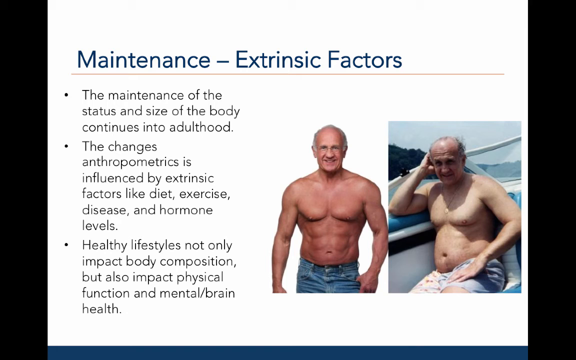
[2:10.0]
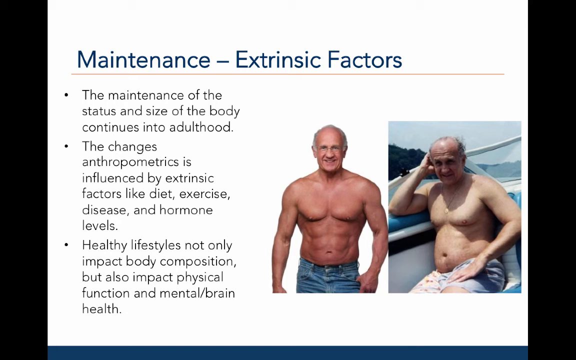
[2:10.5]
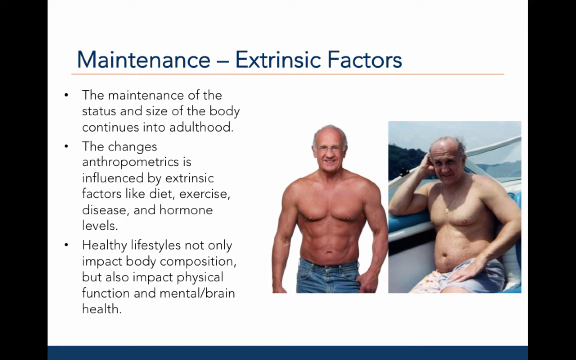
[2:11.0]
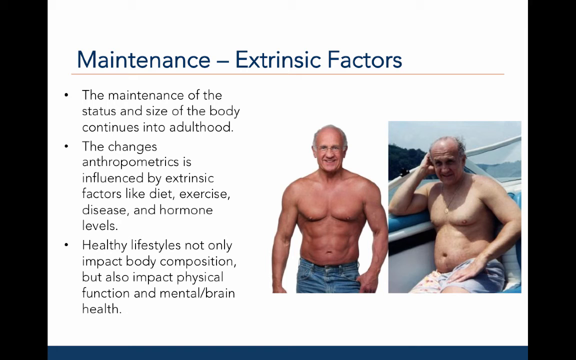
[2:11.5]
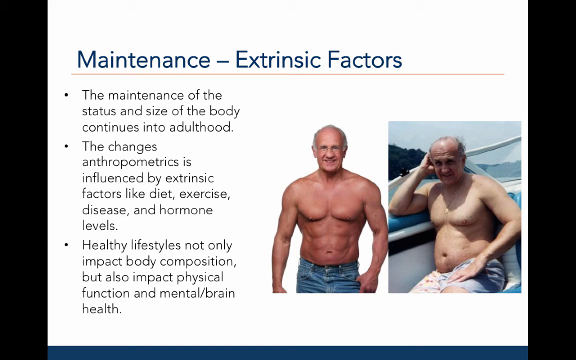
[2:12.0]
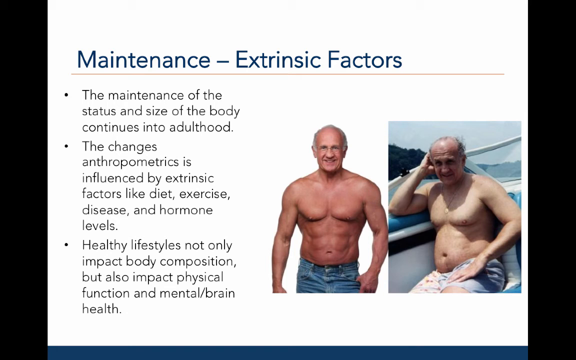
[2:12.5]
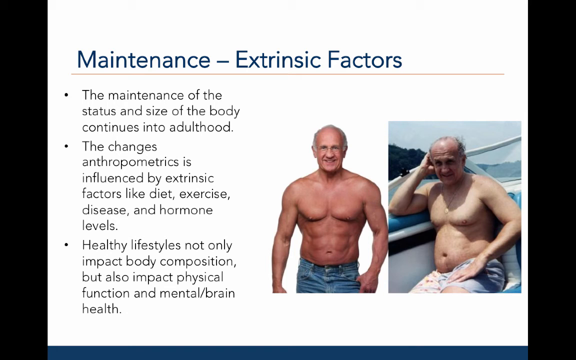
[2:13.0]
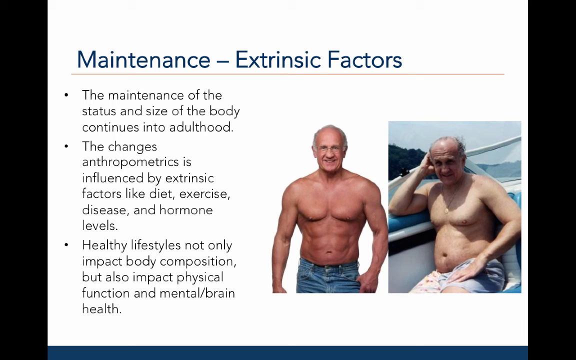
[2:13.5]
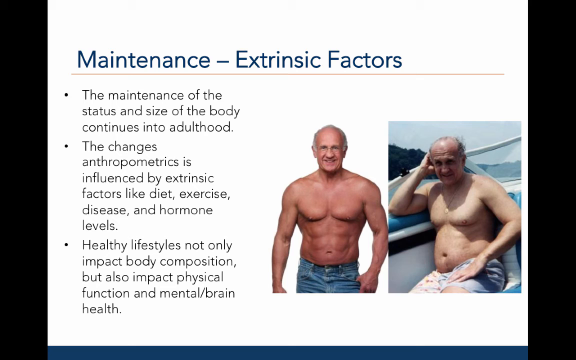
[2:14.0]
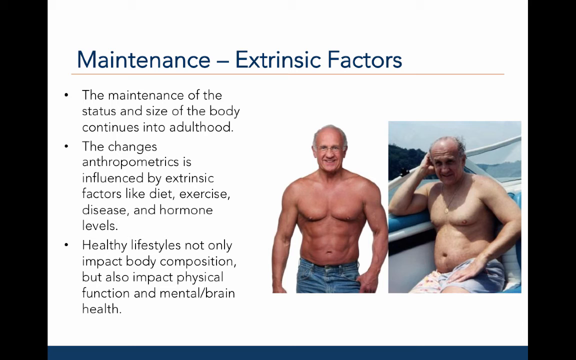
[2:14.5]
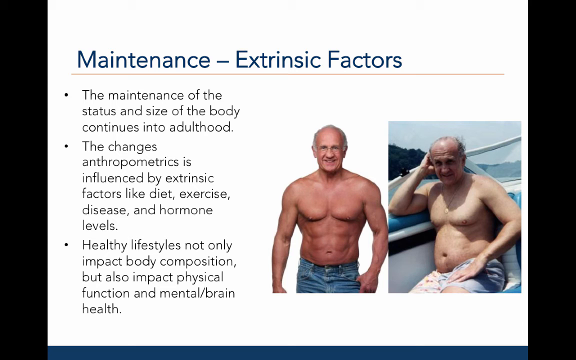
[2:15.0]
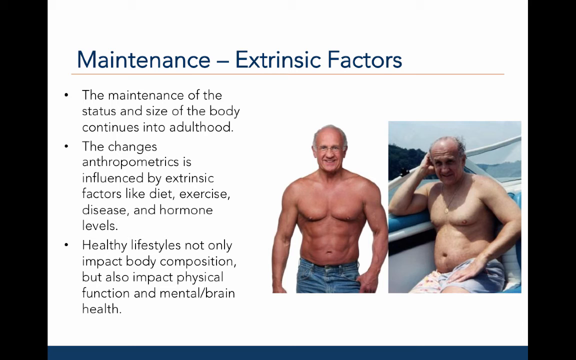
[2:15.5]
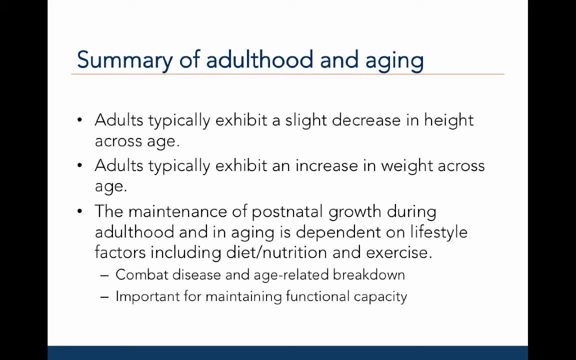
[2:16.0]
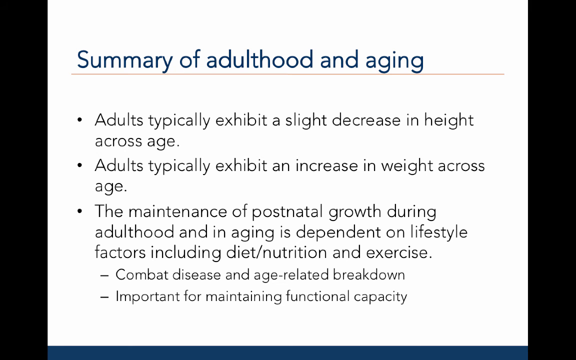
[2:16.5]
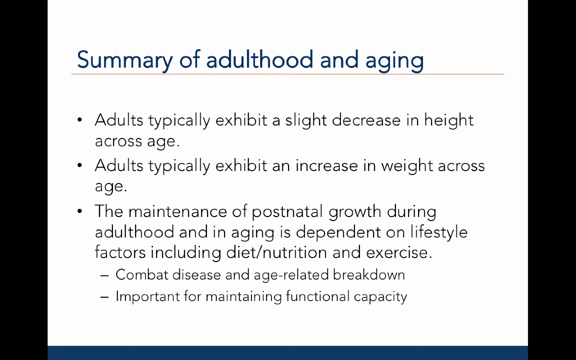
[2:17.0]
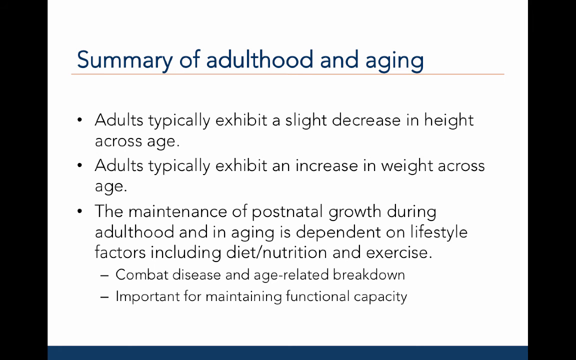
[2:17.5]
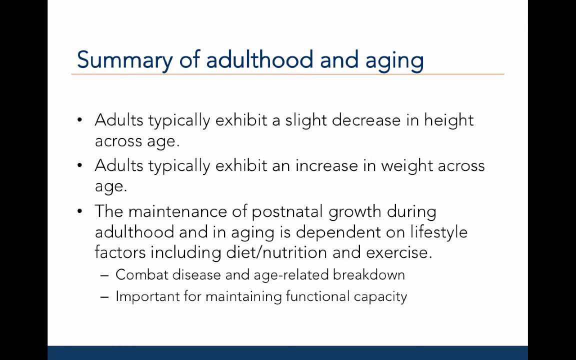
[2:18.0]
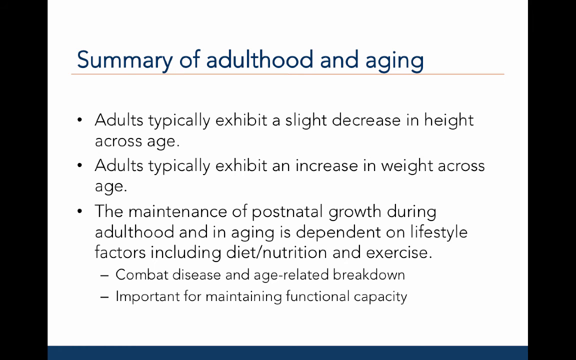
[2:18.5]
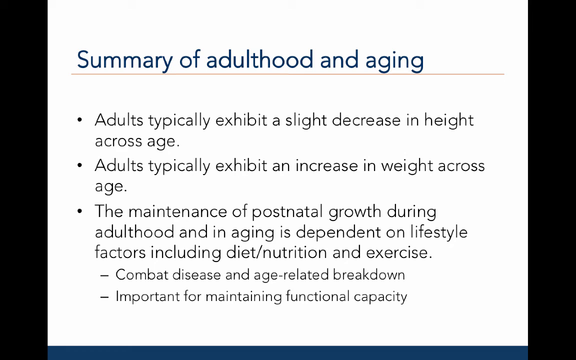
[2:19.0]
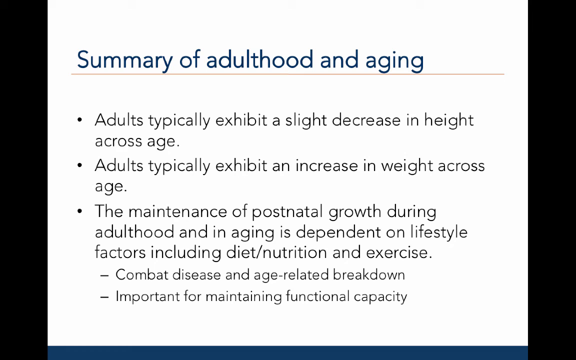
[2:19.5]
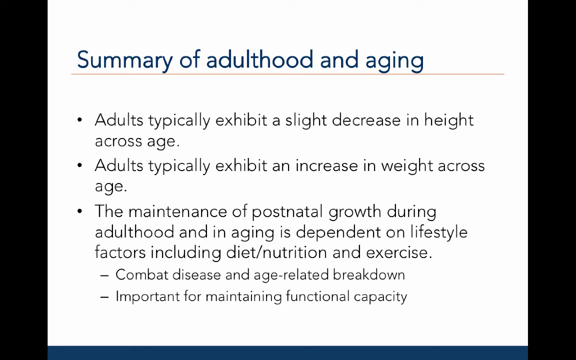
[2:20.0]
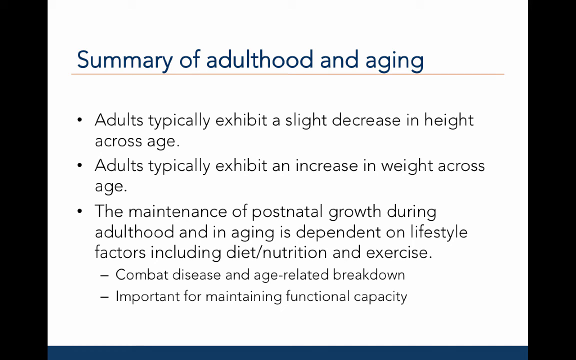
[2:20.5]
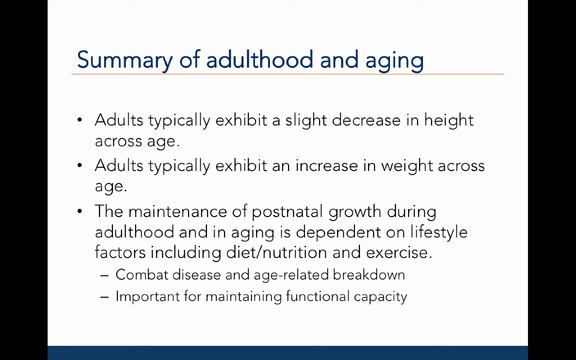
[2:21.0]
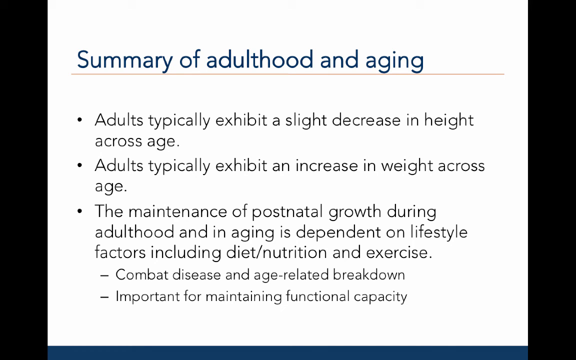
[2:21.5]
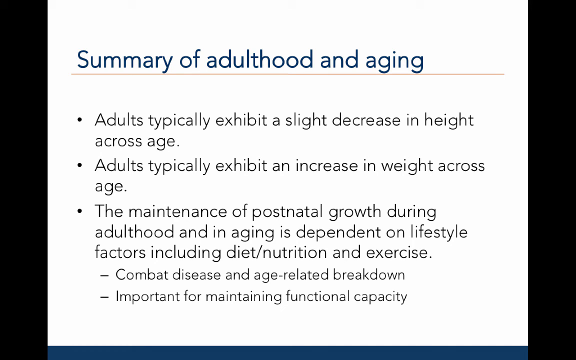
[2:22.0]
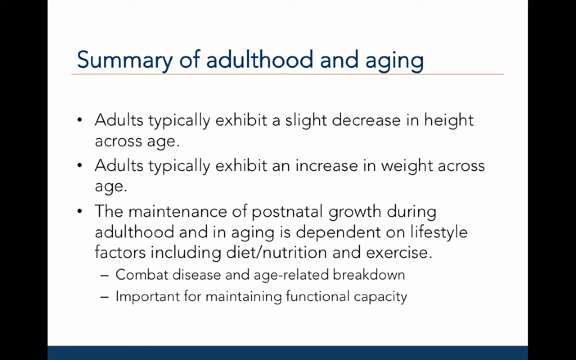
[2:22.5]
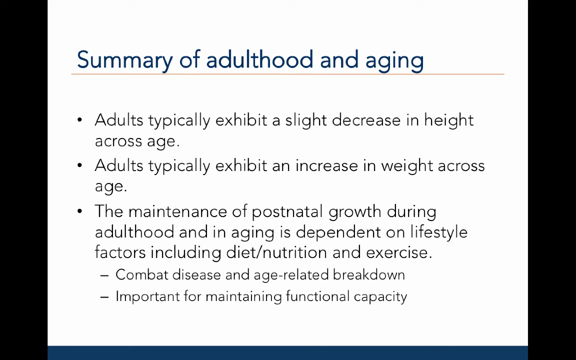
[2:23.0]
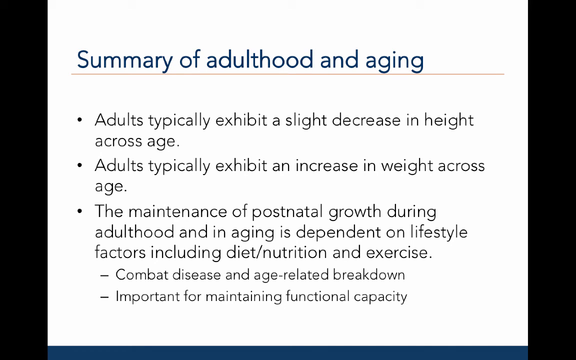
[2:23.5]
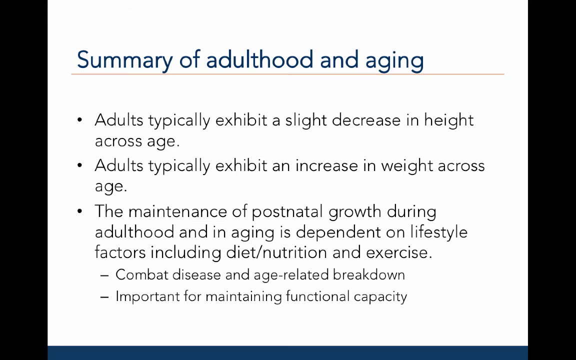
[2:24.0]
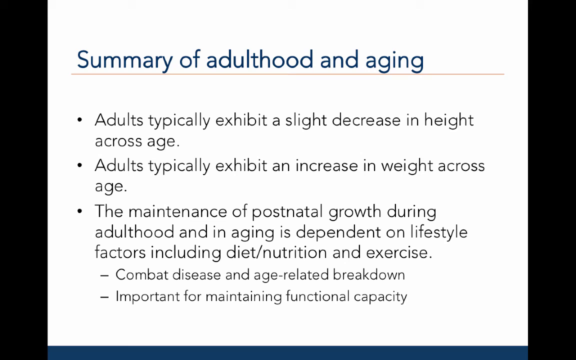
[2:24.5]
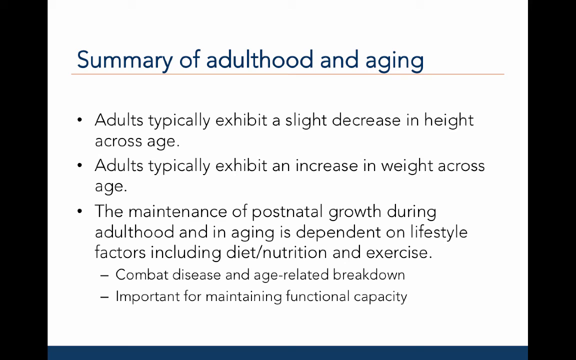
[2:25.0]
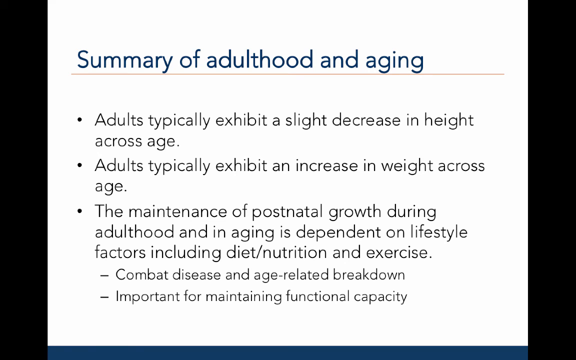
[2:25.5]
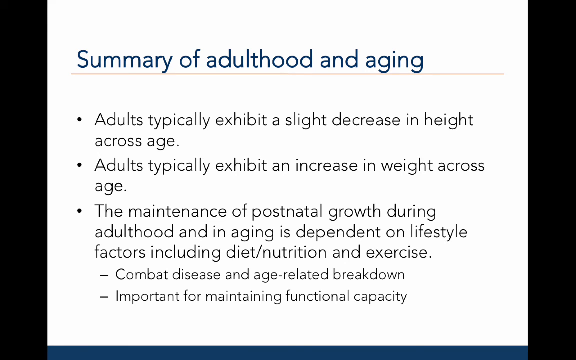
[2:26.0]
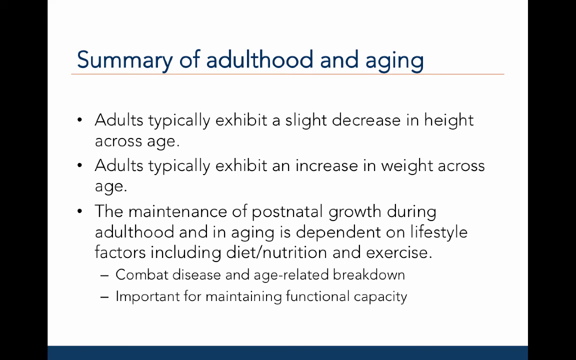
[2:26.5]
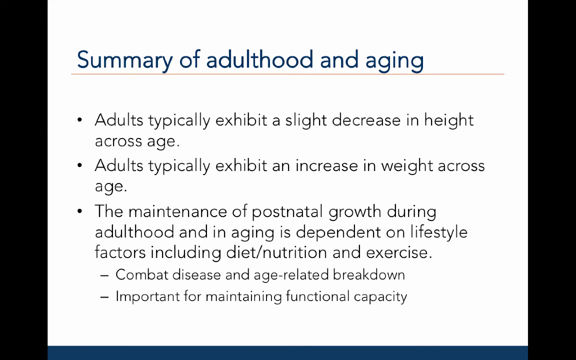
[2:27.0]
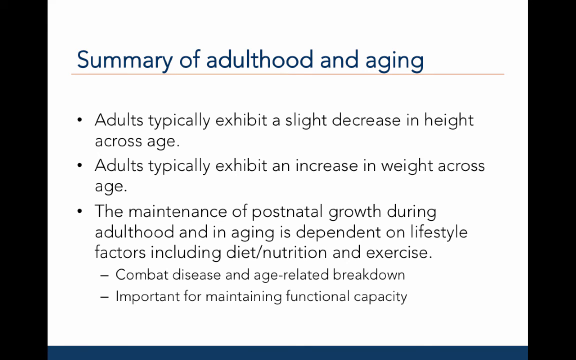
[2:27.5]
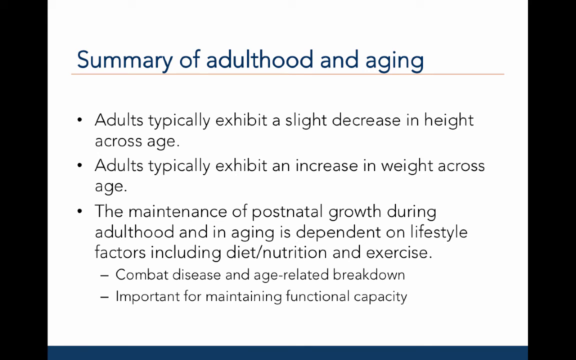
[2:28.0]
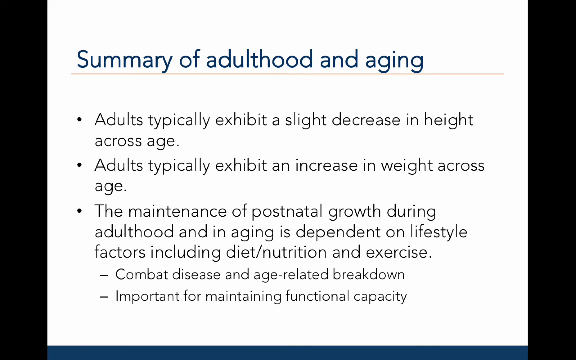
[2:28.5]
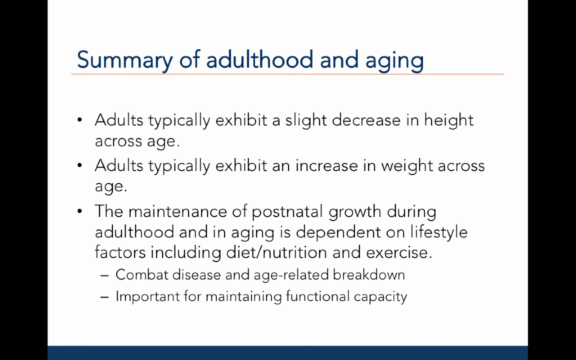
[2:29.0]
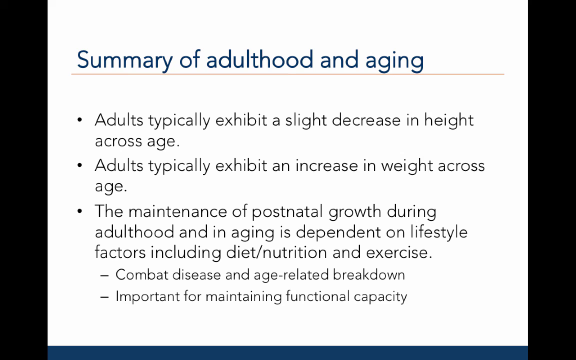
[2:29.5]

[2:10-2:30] The pictures of the healthier man and the less healthy man remain under the maintenance section, and the presentation moves on to a summary of adulthood and aging. The summary states that adults typically exhibit a slight decrease in height across age, that adults typically exhibit an increase in weight across age, that the maintenance of postnatal growth during adulthood and in aging is dependent on lifestyle factors including diet, nutrition, and exercise, and that combating disease and age-related breakdown is important for maintaining functional capacity.